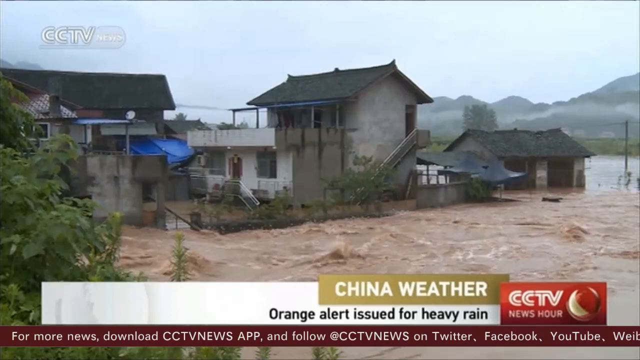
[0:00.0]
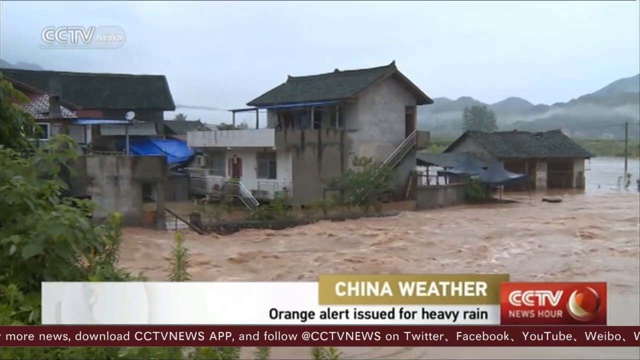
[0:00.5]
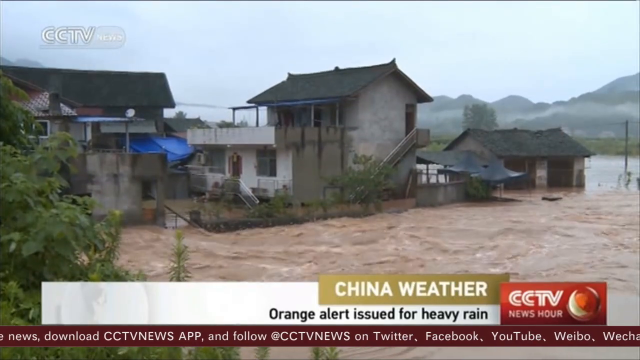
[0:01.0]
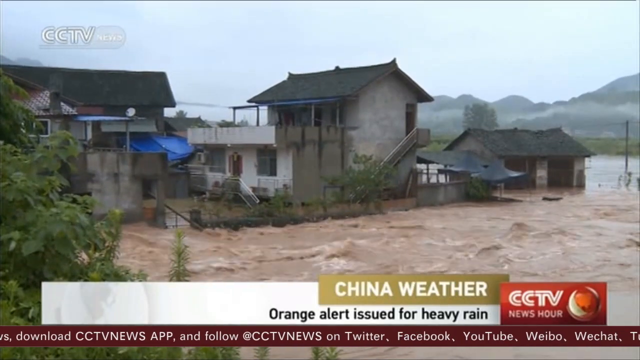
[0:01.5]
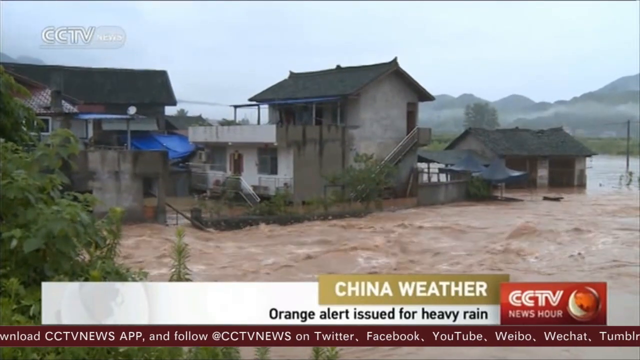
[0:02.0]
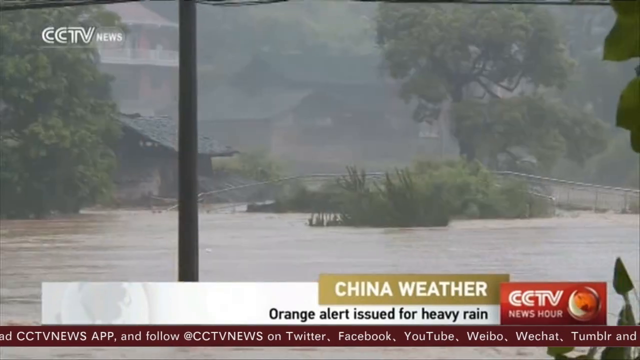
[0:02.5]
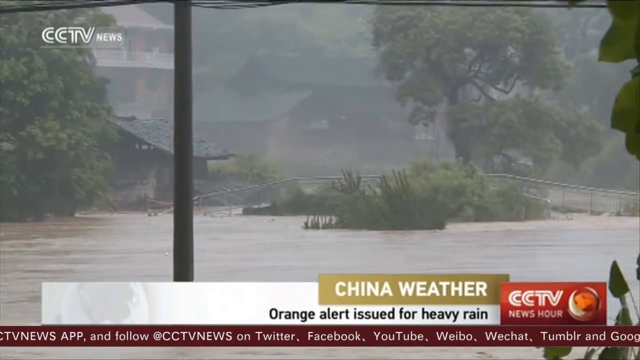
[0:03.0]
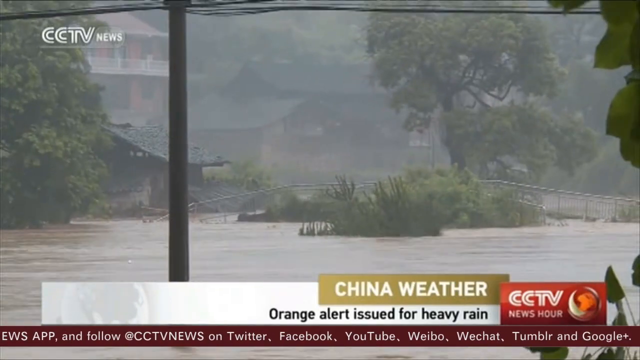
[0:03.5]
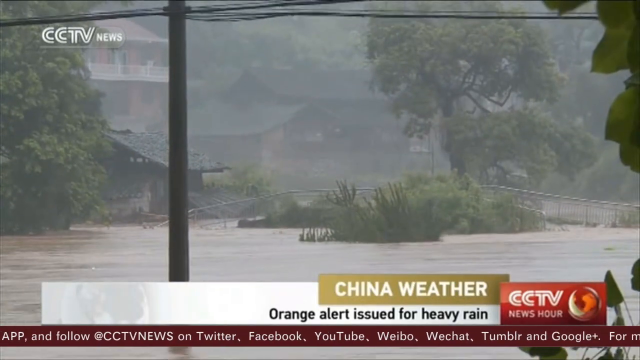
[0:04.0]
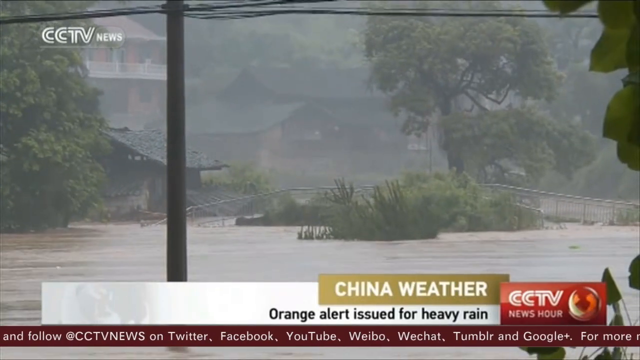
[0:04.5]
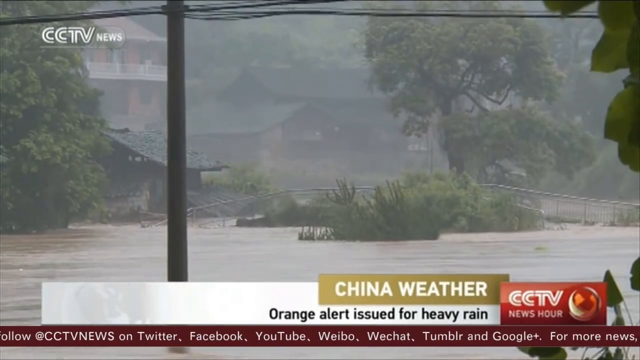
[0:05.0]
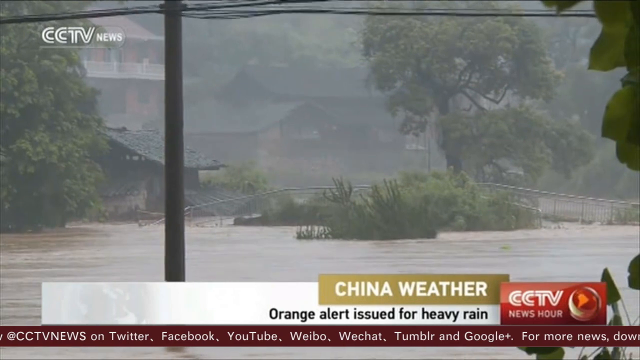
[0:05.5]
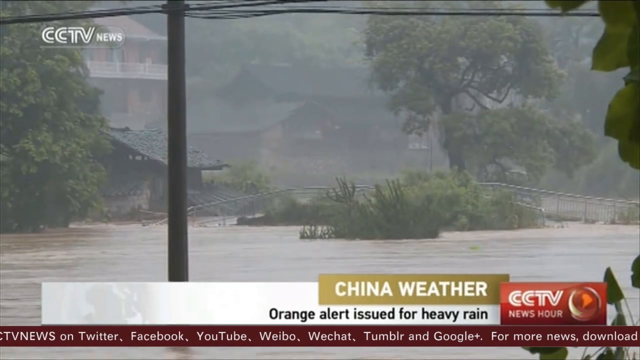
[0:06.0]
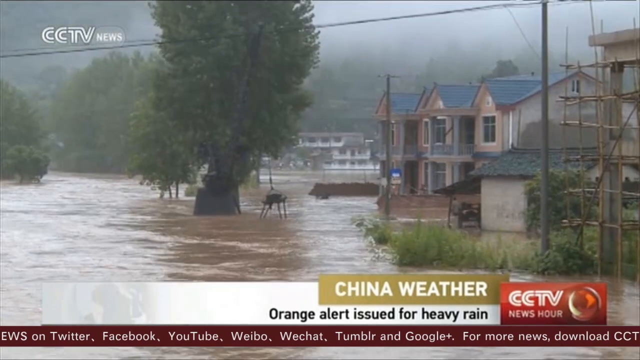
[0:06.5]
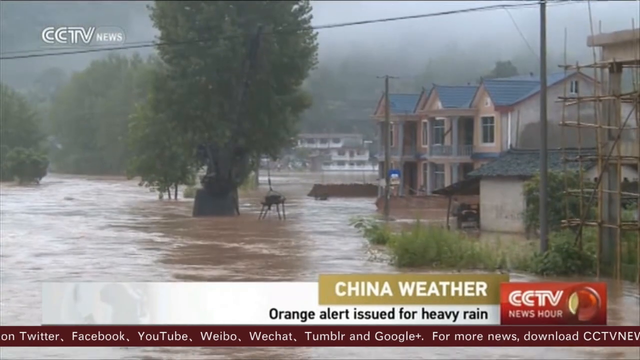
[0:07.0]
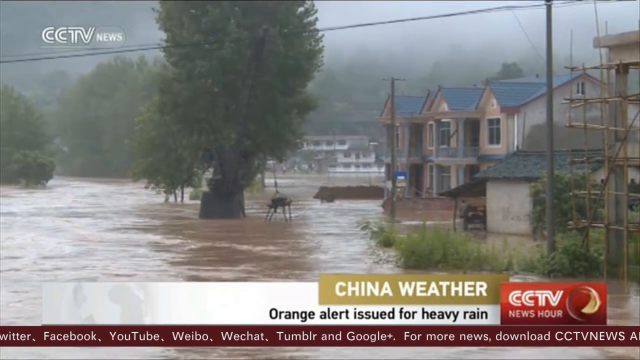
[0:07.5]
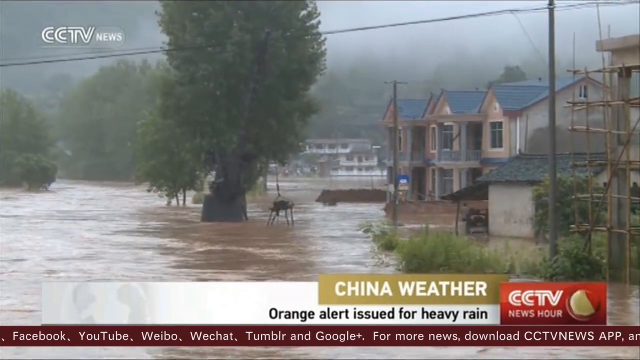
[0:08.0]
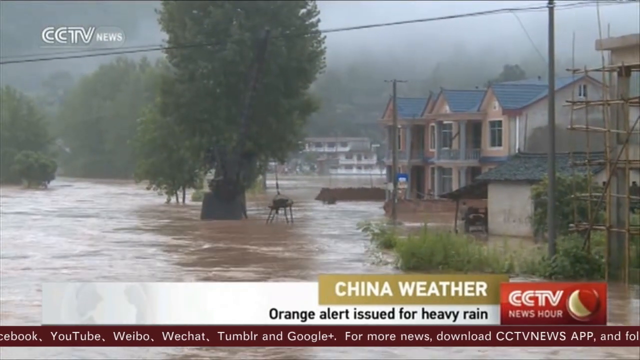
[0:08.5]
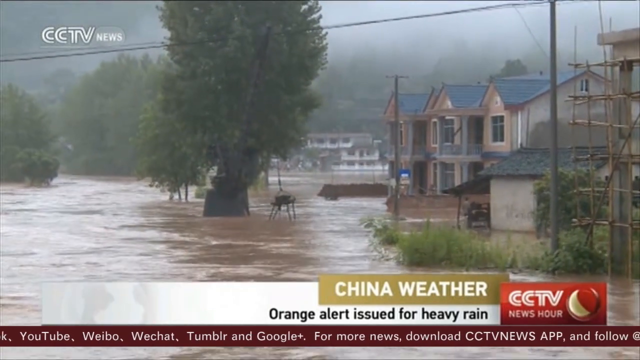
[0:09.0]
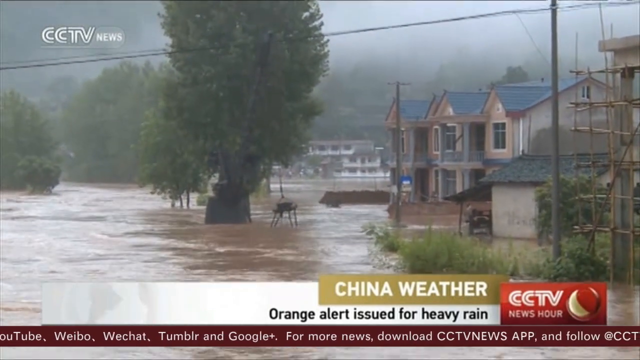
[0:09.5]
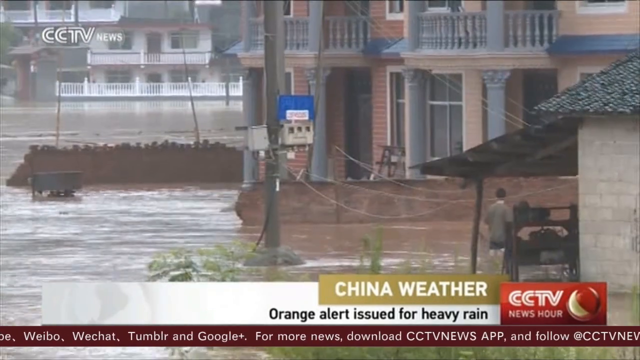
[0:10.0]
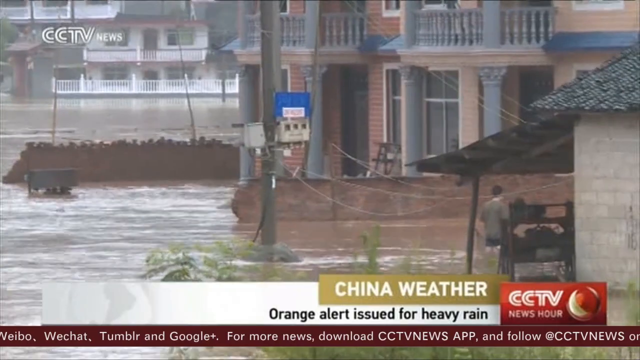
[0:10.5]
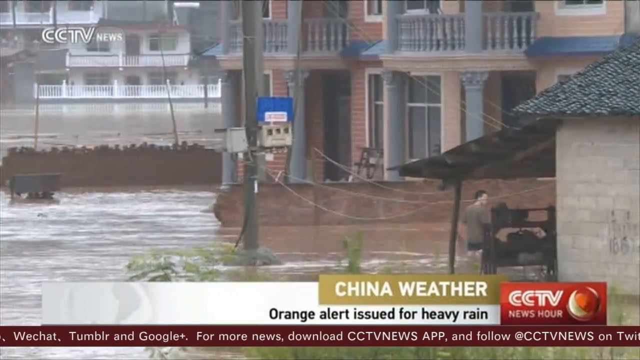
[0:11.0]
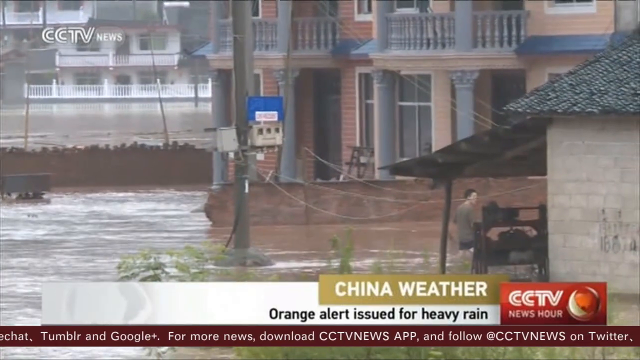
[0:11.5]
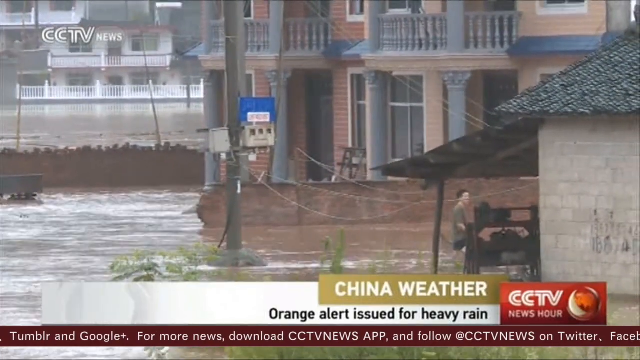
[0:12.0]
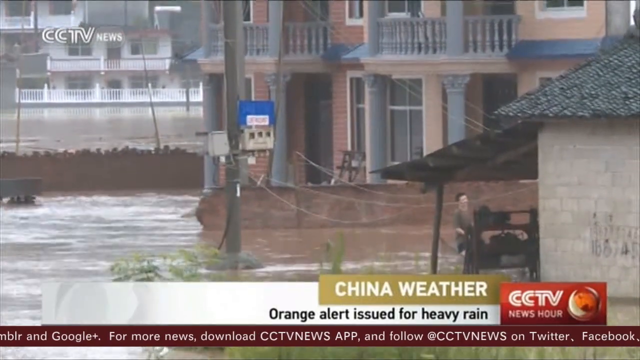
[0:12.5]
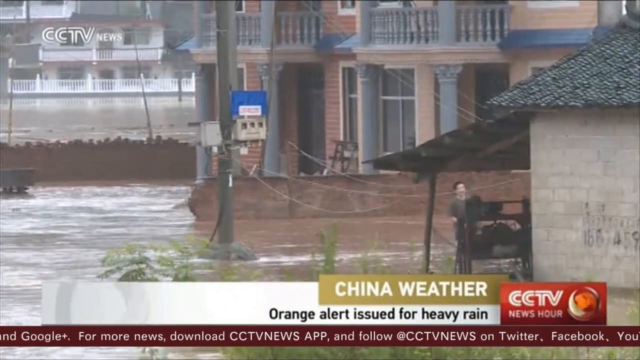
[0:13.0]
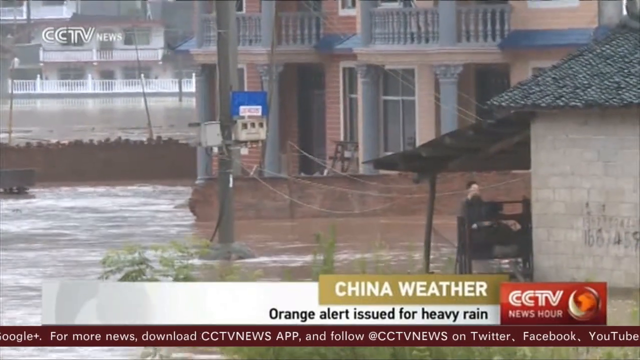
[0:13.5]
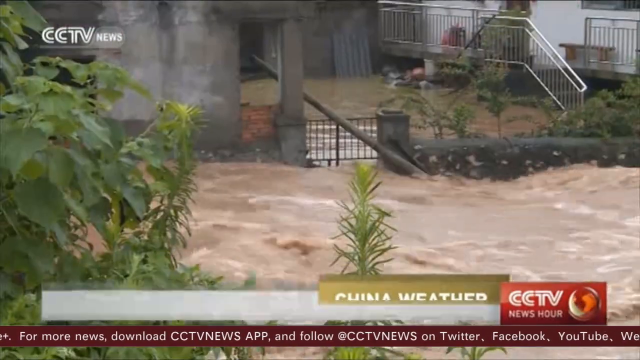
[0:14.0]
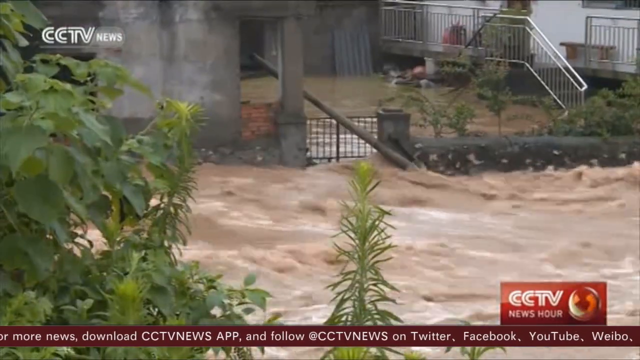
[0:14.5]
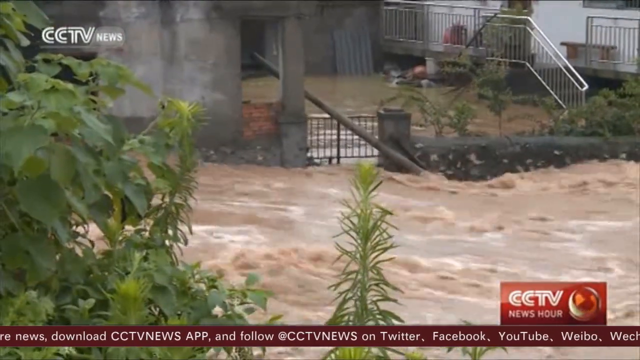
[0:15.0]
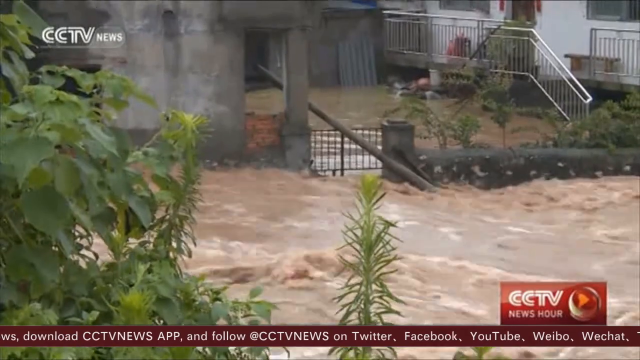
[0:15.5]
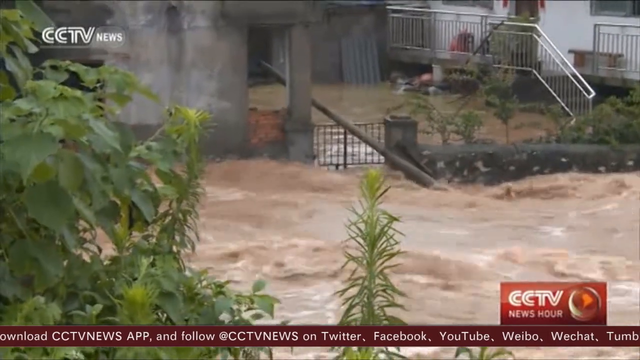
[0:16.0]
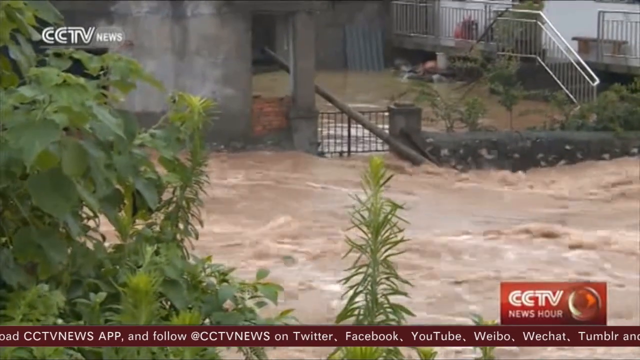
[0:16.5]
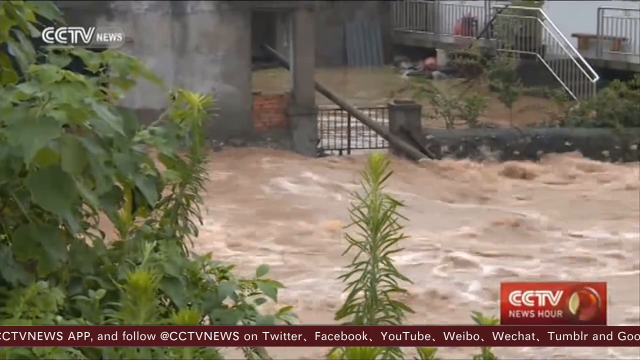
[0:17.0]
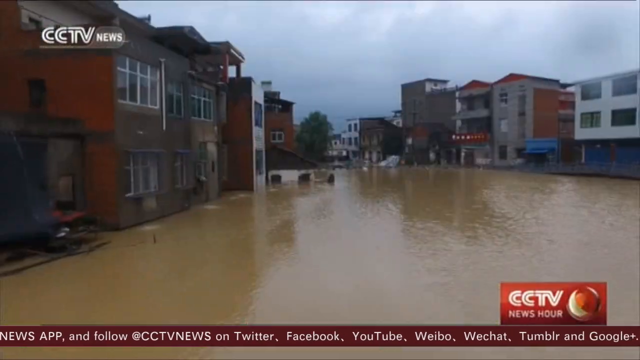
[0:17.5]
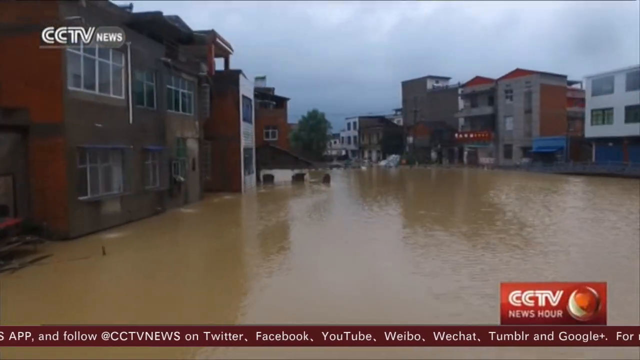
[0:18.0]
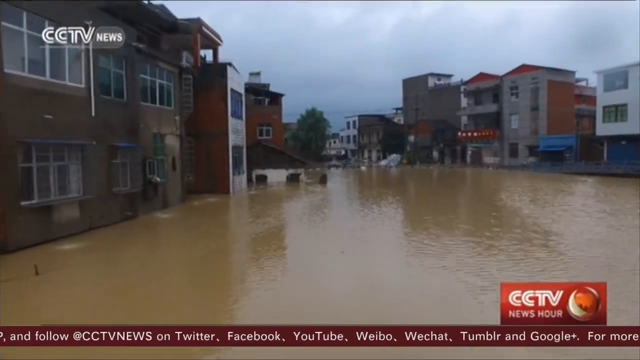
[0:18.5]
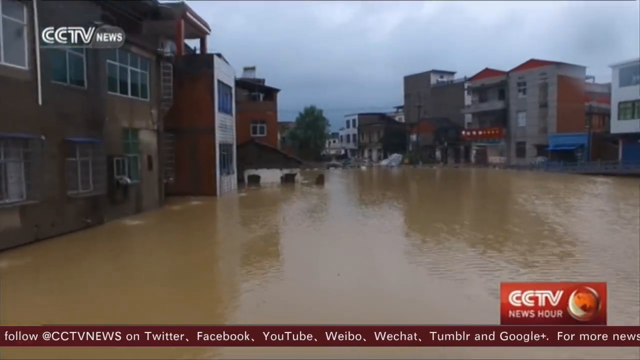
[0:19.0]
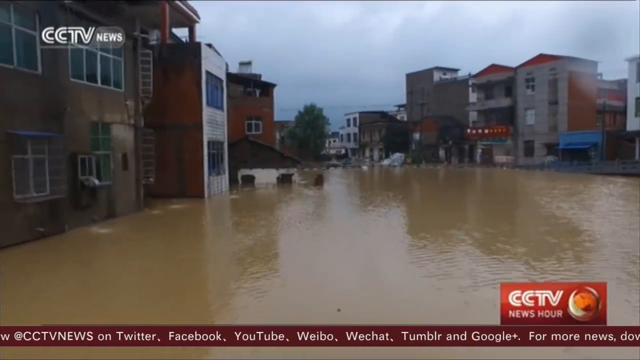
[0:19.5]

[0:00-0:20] The footage is from CCTV's News Hour. A caption across the bottom of the screen carries the headline "China weather orange alert issued for heavy rain," and beneath it a news ticker gives contact information for finding out more on socials or on the CCTV News app. The first image shows rural buildings in the Chinese countryside surrounded by water; it looks as if a river has burst its banks. The water is not as high as the first story of the buildings, but it is moving very quickly. The video cuts to a similar, slightly wider shot with more scale, showing trees and buildings in the distance and a lot of water flowing quickly past the camera. Another cut shows a similar scene with lots of houses on the right-hand side of the frame and mostly trees on the left, the water moving quickly through them so that it looks like an entire river running through the streets. Next comes a closer shot of some houses, where a pedestrian stands up to his knees in water. A close-up follows of someone's gate and fence outside their house, with water roaring past very quickly at a very high level. The video then cuts to what looks like a high street lined with buildings that are apparently shops or offices, completely filled with water, as a drone flies overhead to give a clear view of the scene.